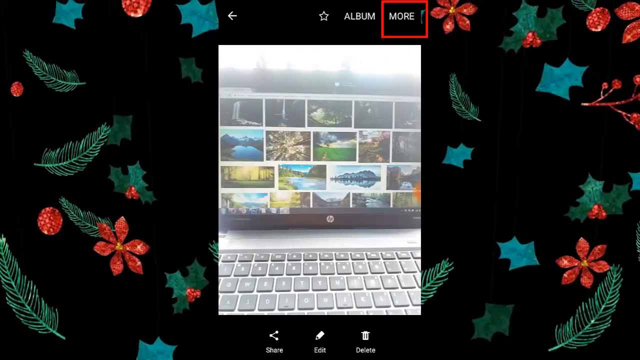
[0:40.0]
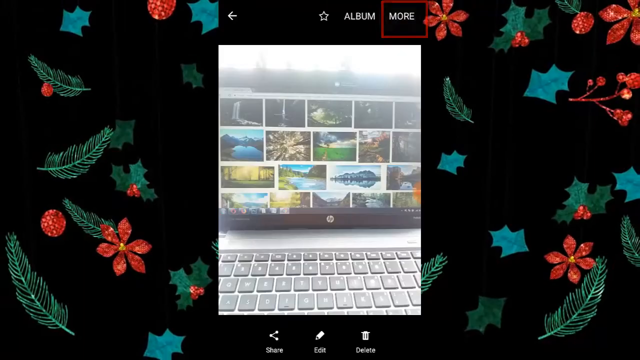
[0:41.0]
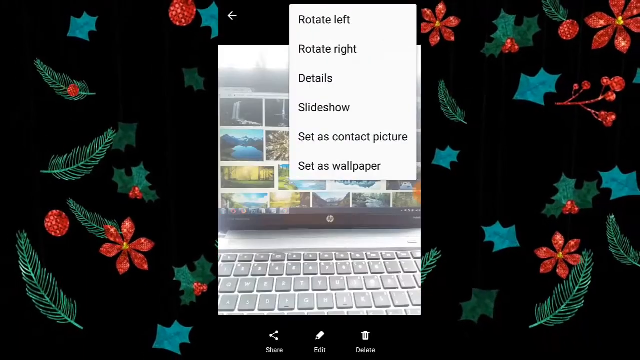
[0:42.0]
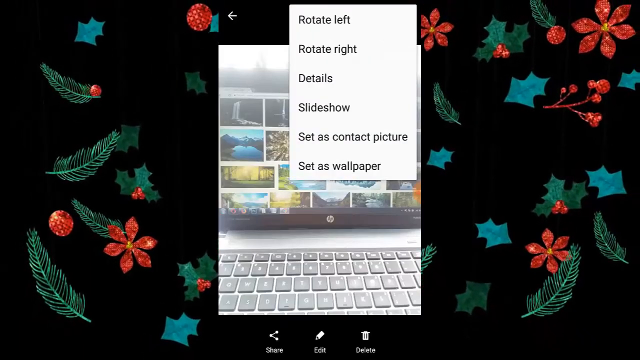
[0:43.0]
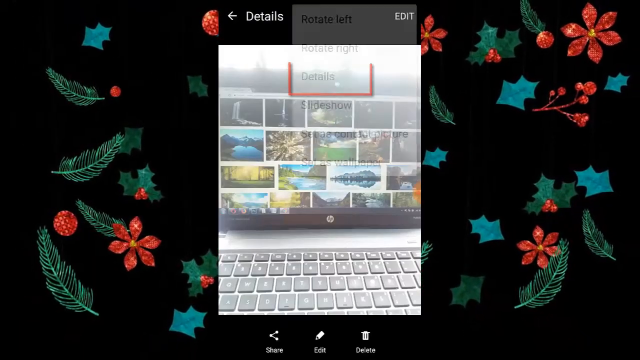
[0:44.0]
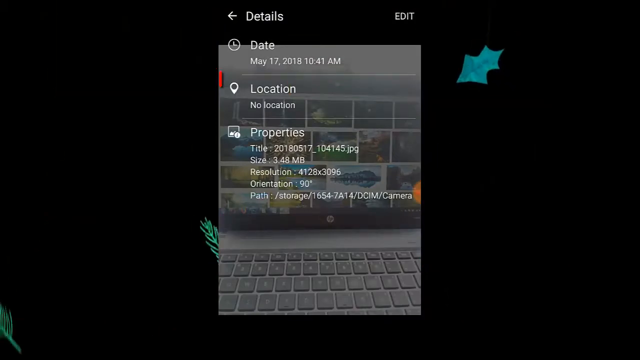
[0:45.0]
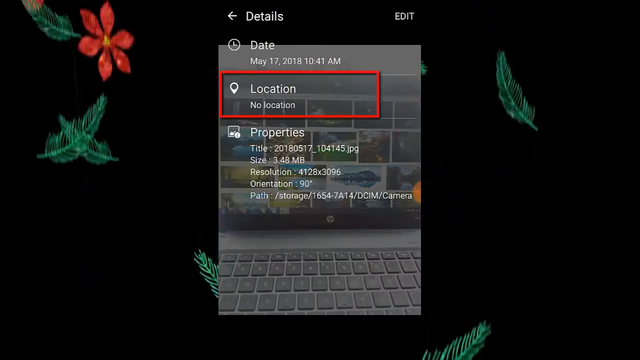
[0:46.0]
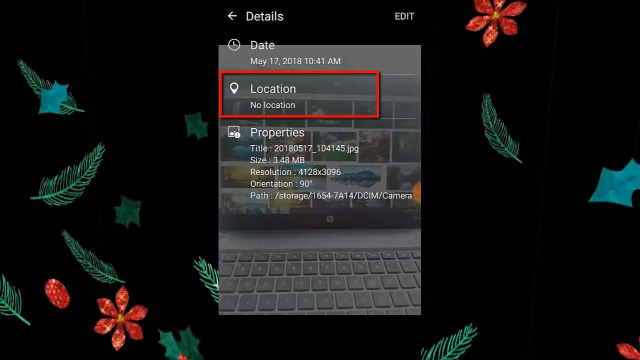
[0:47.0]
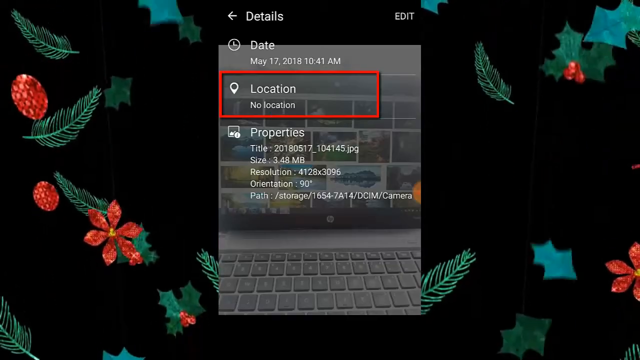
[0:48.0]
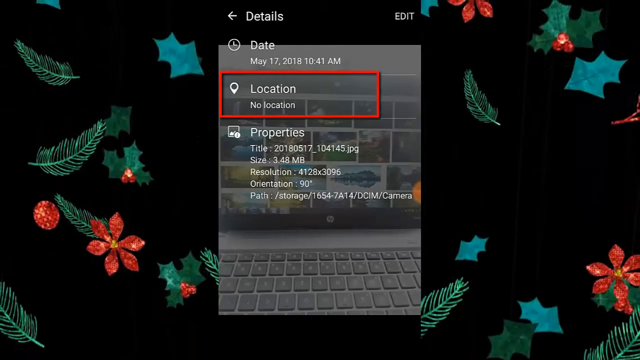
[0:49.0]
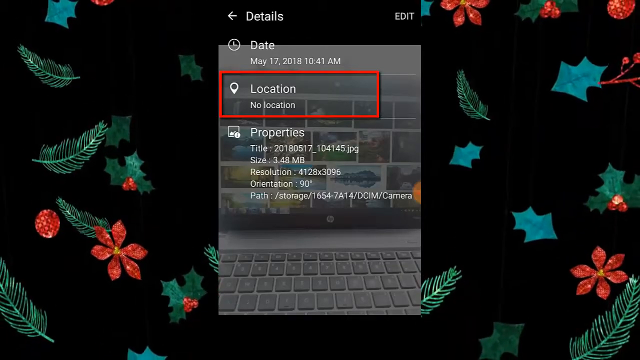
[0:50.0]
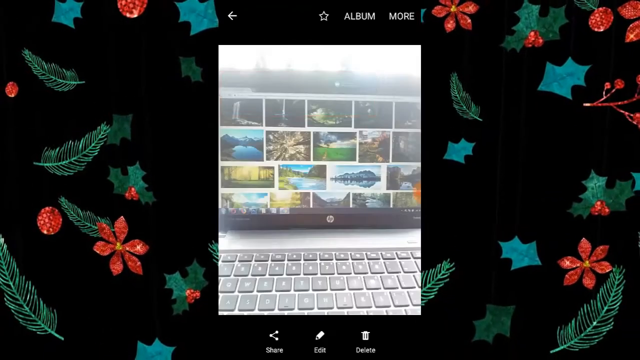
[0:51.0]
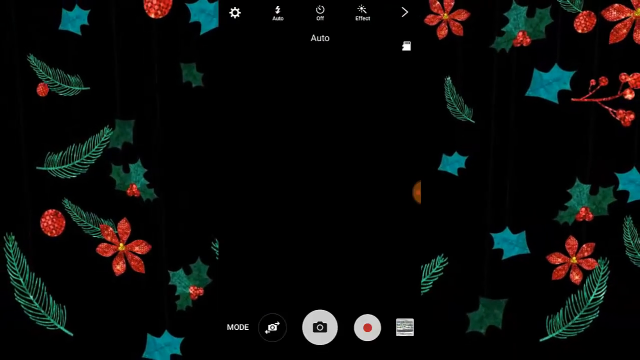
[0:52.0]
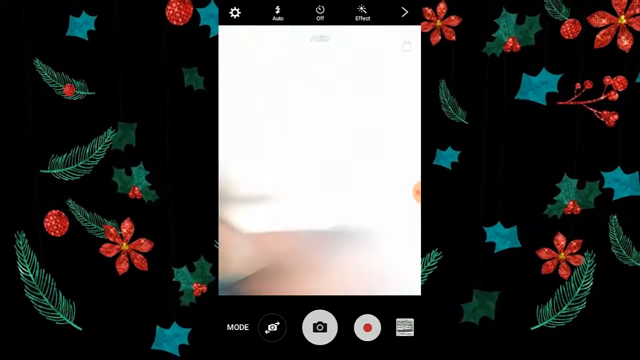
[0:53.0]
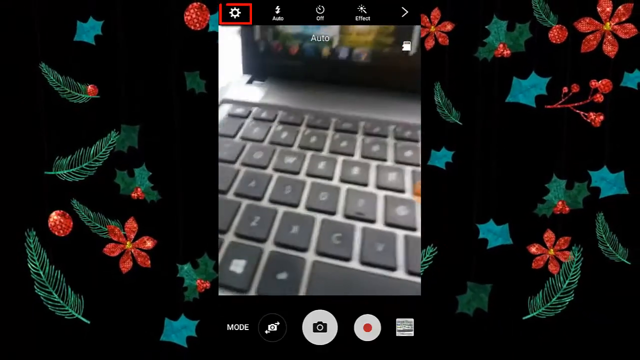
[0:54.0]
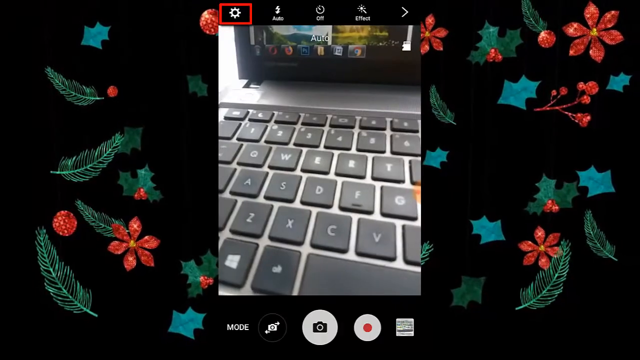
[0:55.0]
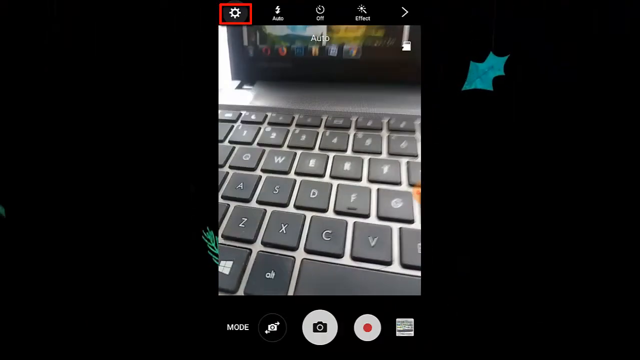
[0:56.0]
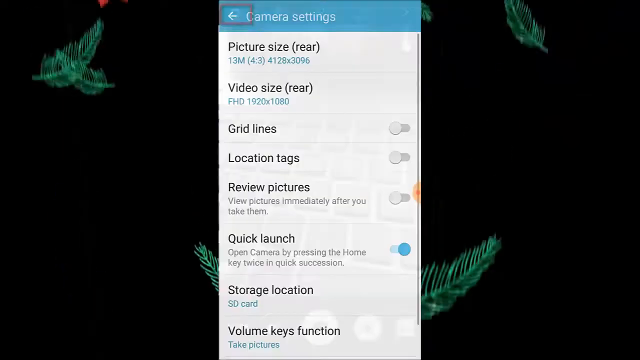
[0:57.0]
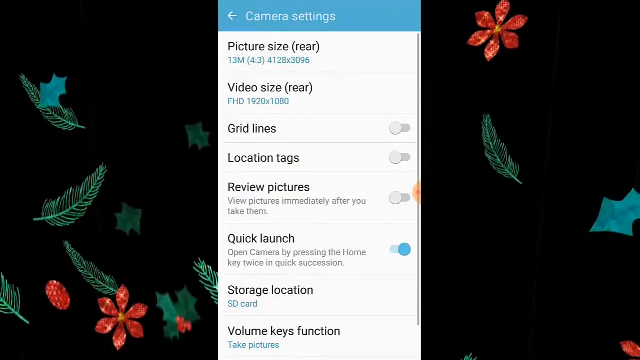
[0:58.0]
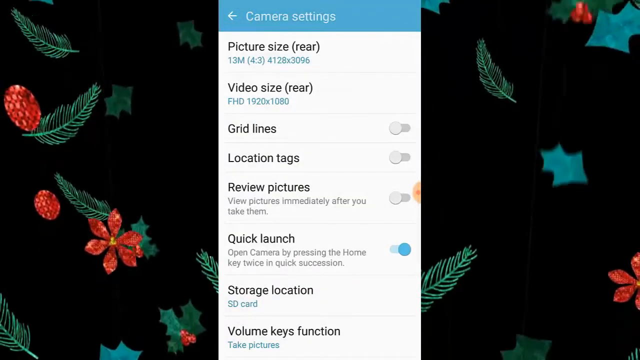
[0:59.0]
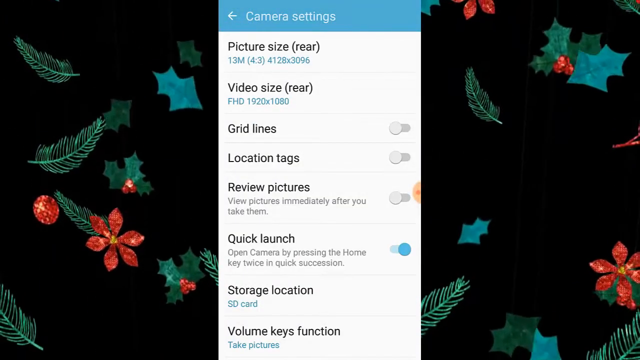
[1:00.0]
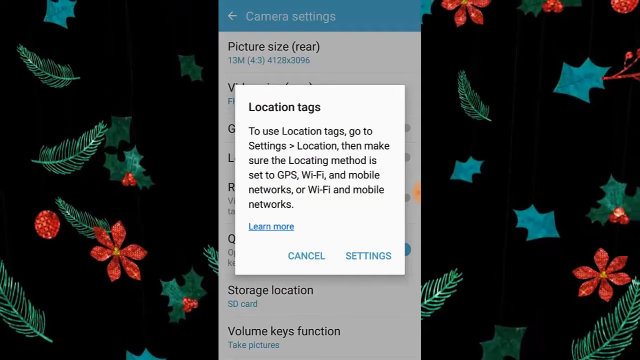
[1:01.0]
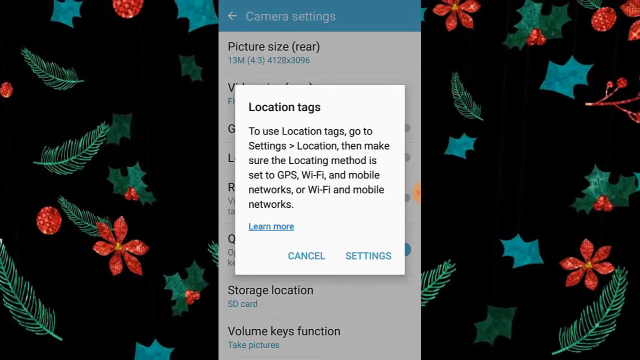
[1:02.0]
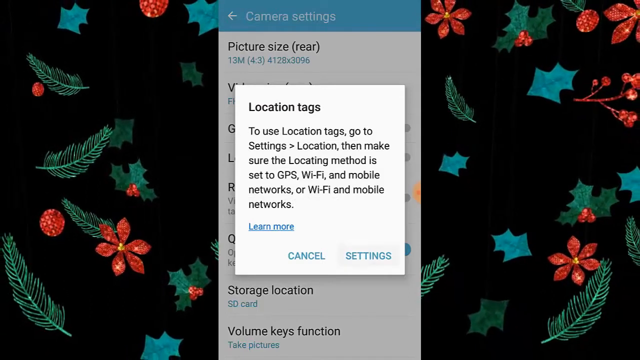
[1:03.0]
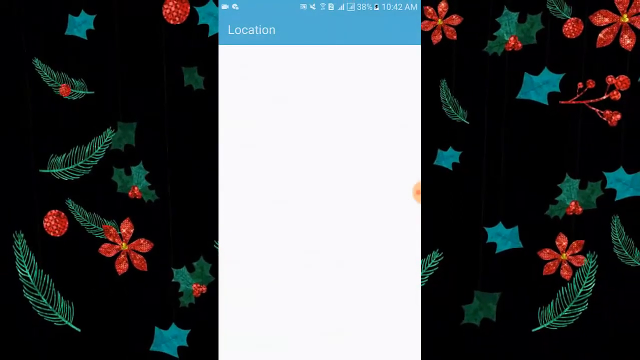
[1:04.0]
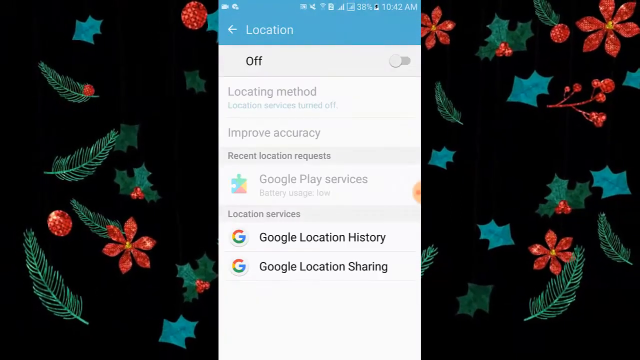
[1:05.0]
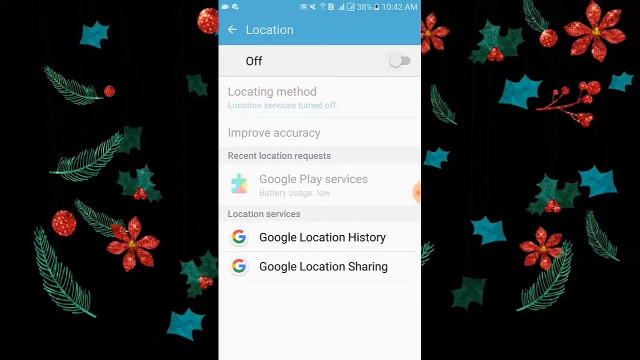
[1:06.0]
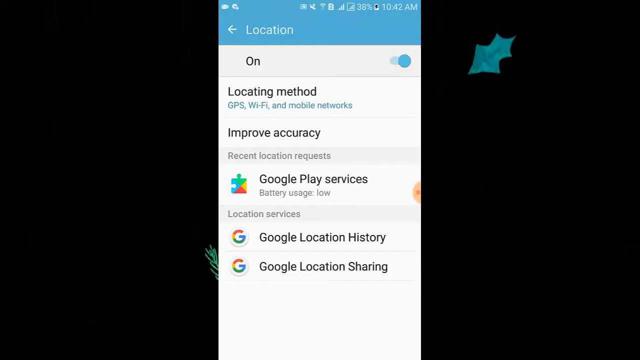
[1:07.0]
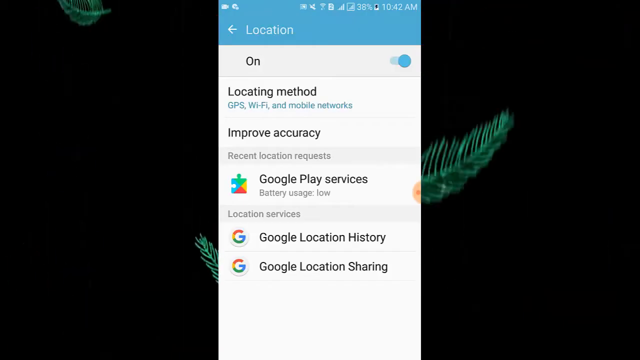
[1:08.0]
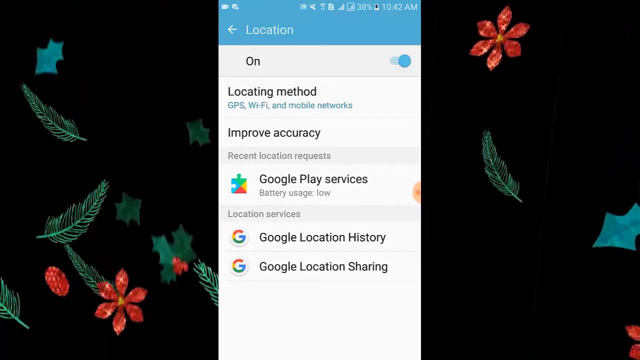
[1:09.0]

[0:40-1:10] A screencast of a smartphone shows the camera app open and facing a laptop computer. The laptop is a small, gray, portable computer with a black keyboard, and its web browser is open to Google Image Search, showing various natural settings such as mountains, forests, and lakes. The screencast is rectangular, and on its sides is a black background with an animation of leaves and flowers blowing in the wind. The user right-clicks on an image, bringing up a menu with the options Rotate Left, Rotate Right, Details, Slideshow, Set as Contact Picture, and Set as Wallpaper. The user clicks Details, which opens a Details menu with date, location, and properties. The user encircles location in a red square and clicks on it, then goes back to the camera app, still facing the laptop and the Google Images. The camera looks down at the side of the desk, briefly showing the floor, then back at the laptop keyboard. The user then goes to the camera settings, where the options are picture size (rear), video size (rear), grid lines, location tags, review pictures, quick launch, storage location, and volume keys function. The user clicks on location tags and turns Location on.